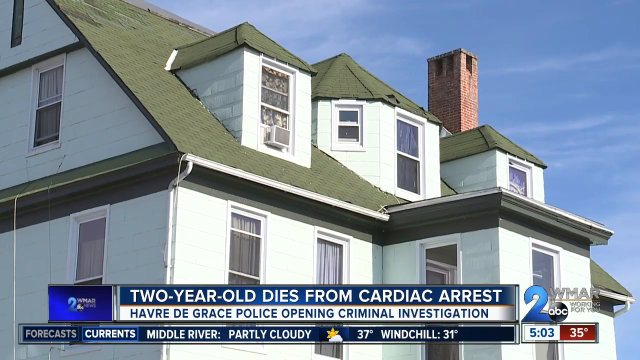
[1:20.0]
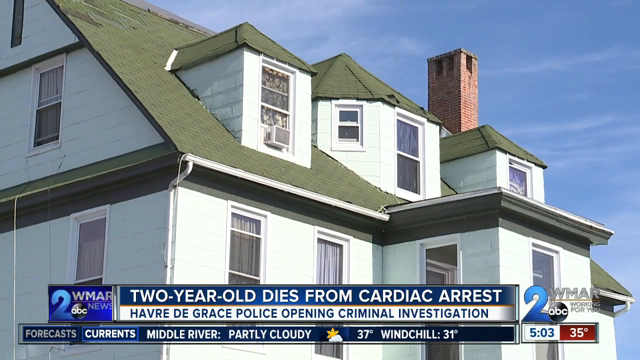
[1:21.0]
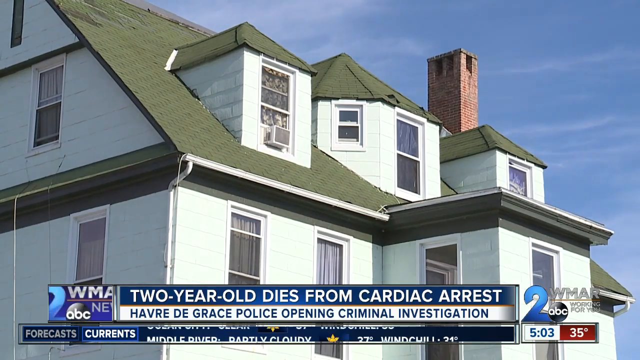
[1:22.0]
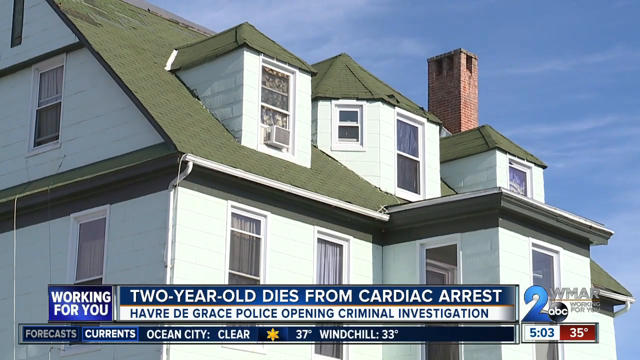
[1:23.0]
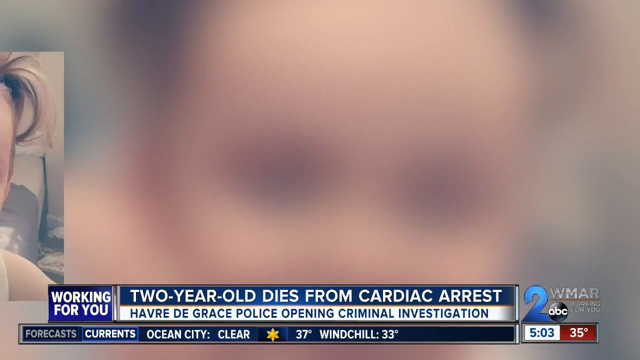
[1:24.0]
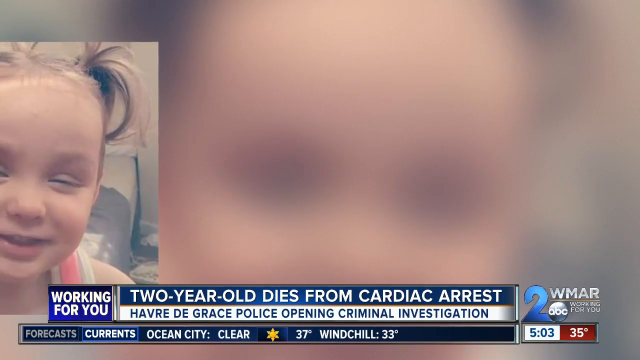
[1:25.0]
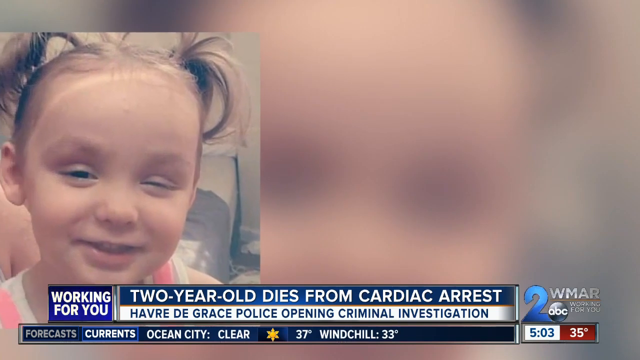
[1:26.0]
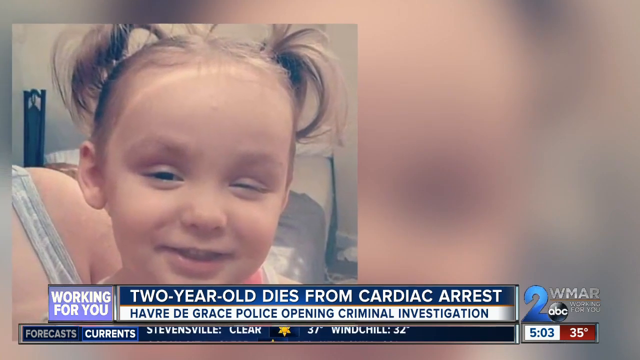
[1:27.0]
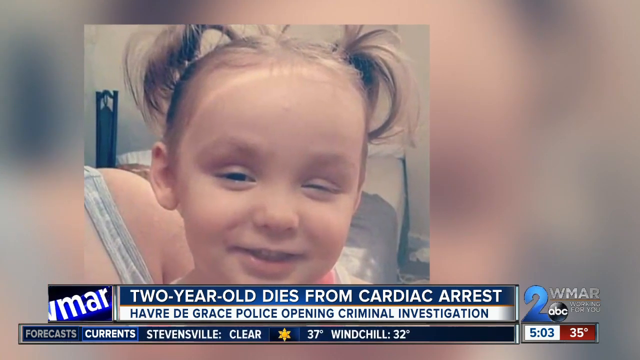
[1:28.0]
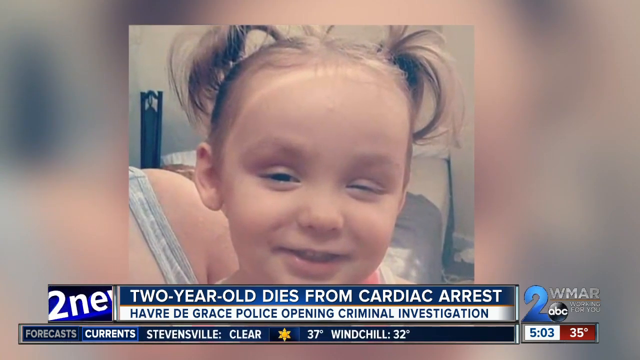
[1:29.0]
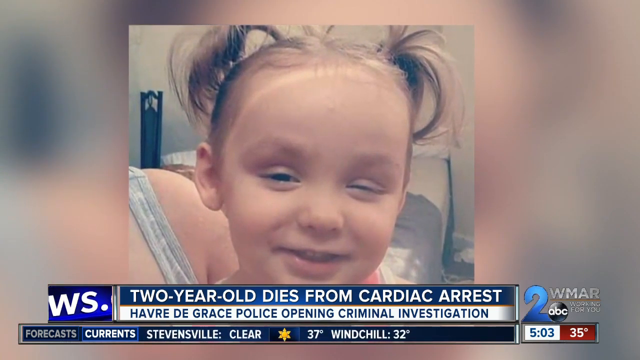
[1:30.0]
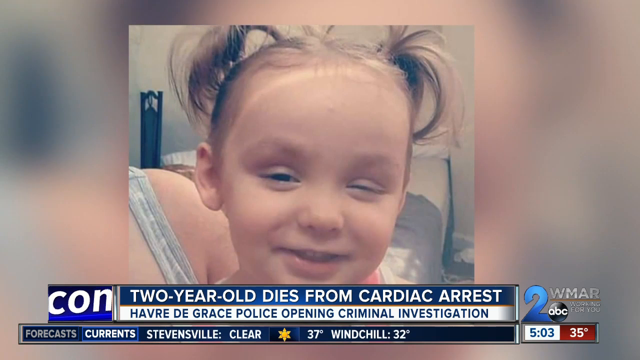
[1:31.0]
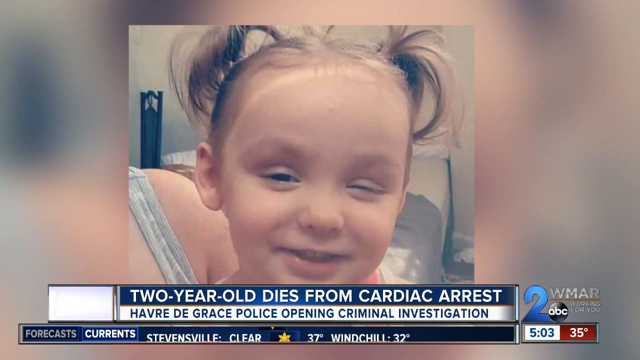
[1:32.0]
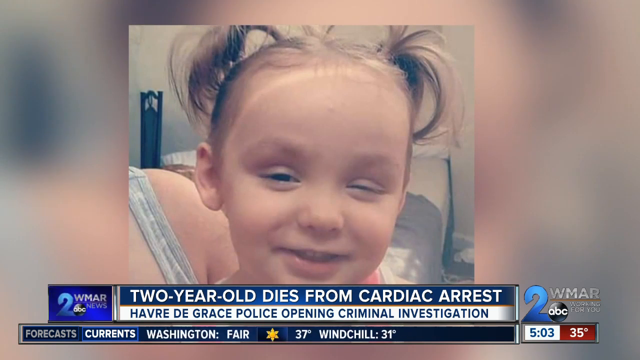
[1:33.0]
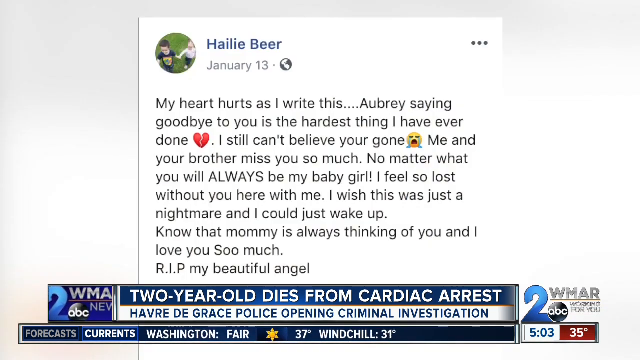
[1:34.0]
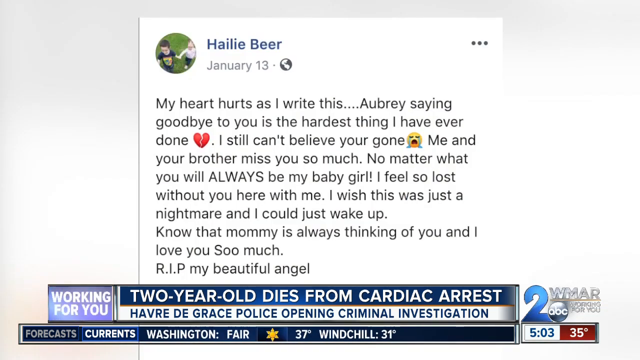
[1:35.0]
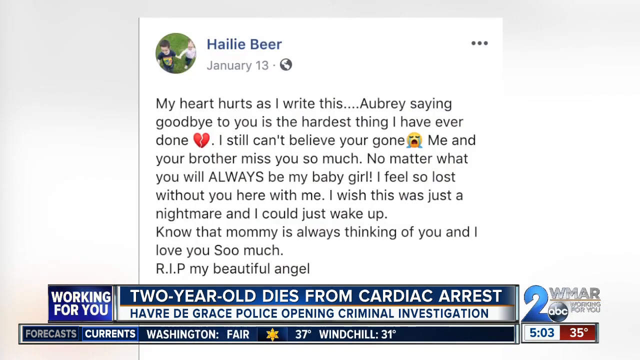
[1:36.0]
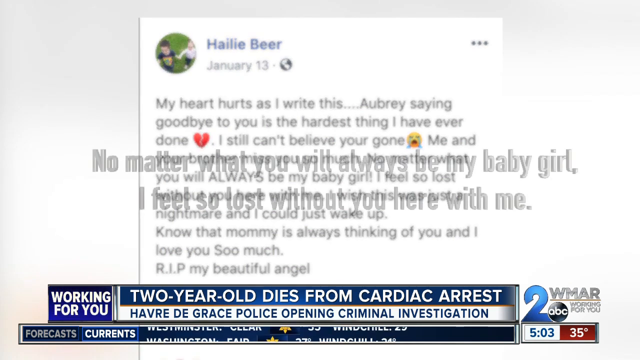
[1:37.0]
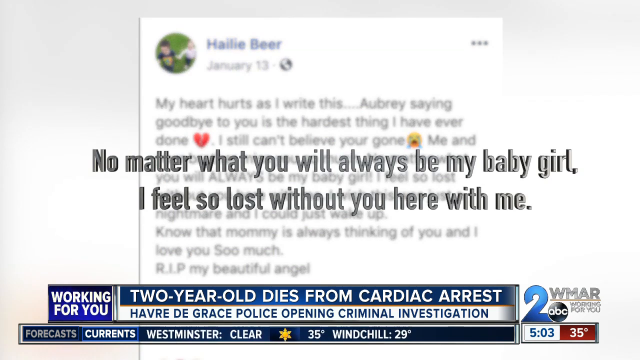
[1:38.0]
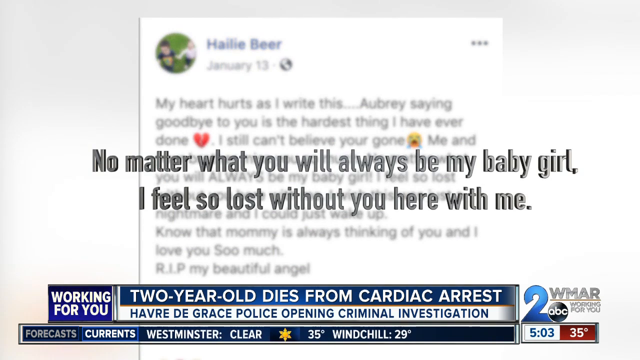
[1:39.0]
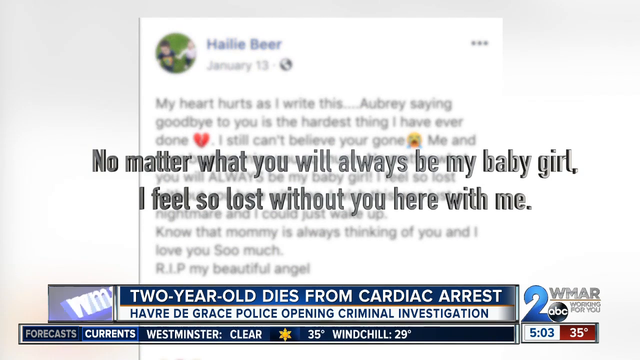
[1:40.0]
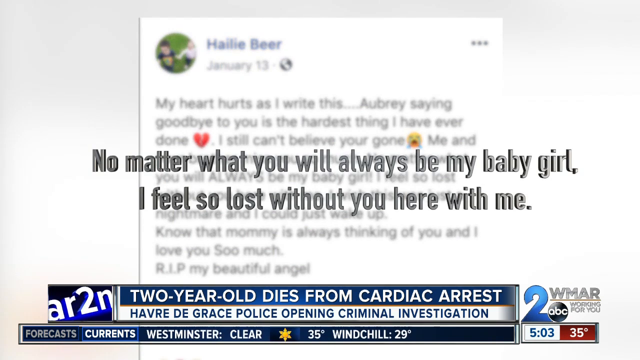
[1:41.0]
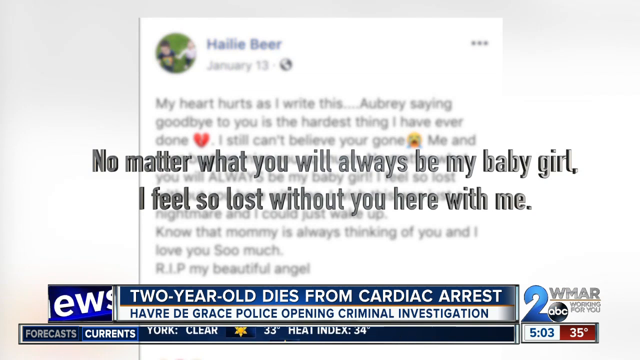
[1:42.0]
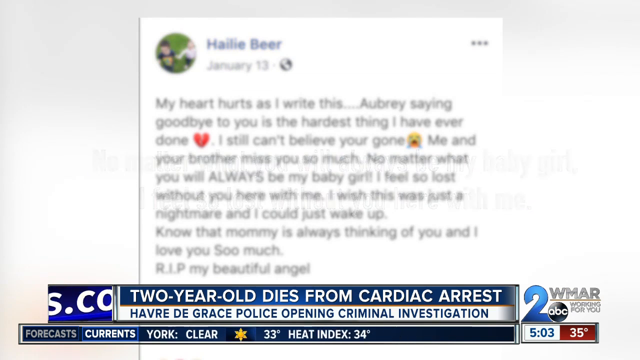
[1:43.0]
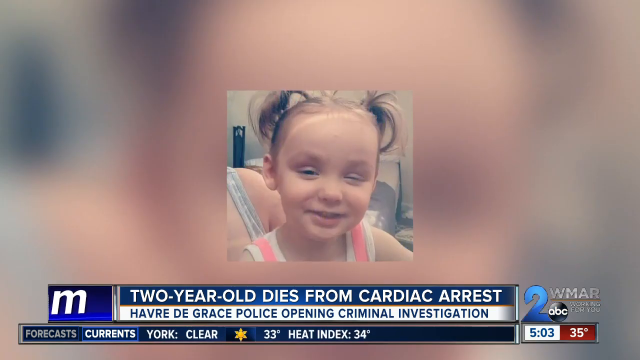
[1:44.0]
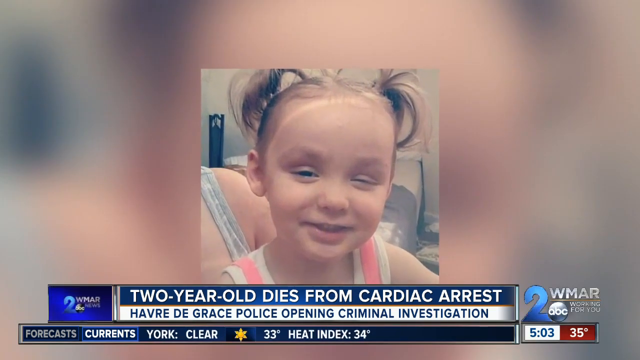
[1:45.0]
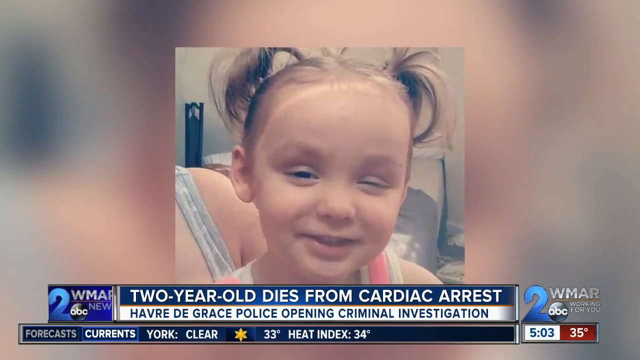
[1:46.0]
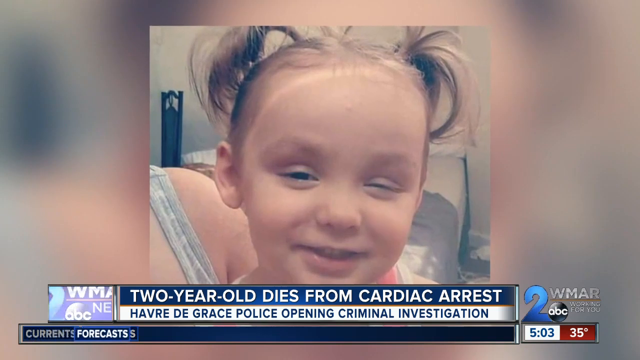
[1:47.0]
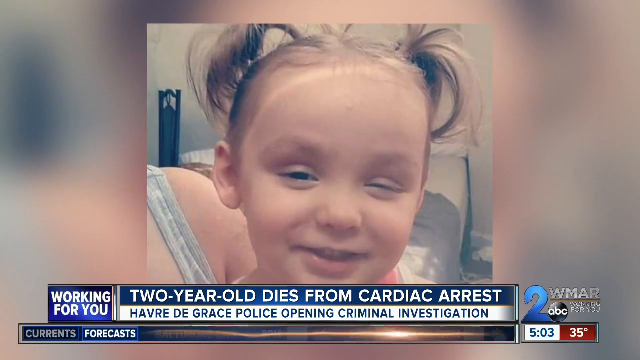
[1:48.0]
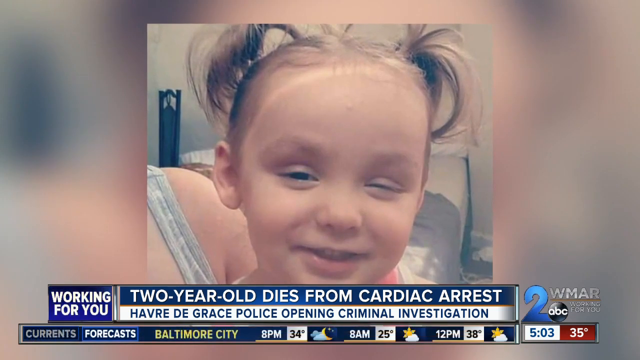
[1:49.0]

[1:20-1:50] The caption "two-year-old dies from cardiac arrest" appears, with a line about Harvey Day Grace police opening a criminal case. An Instagram post, apparently written by the girl's mother, is shown, including the lines "no matter what, you will always be my baby girl. I feel so lost without you here with me. I wish this was just a nightmare and I could just wake up," "know that mommy is always thinking of you and I love you so much," and "RIP, my beautiful angel." A picture of the little girl is shown again, and a police officer appears on camera as the segment ends.